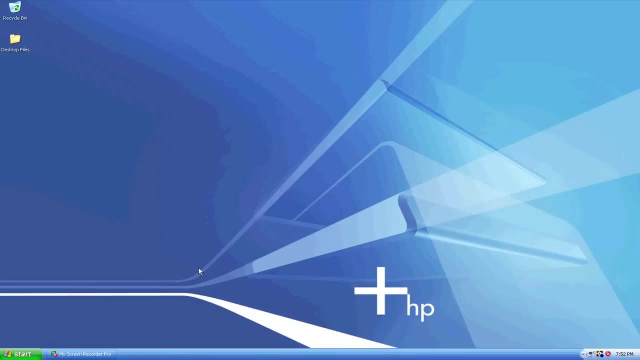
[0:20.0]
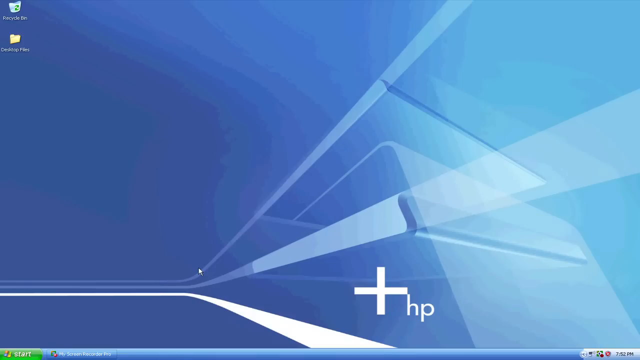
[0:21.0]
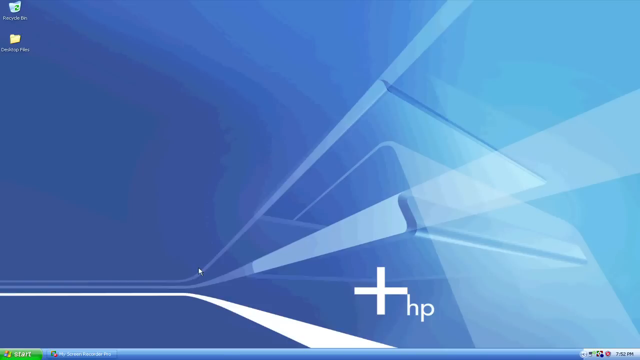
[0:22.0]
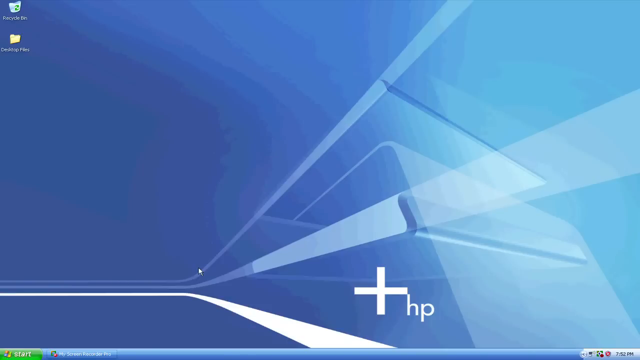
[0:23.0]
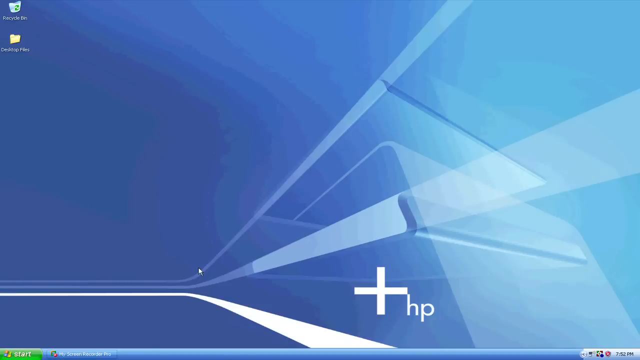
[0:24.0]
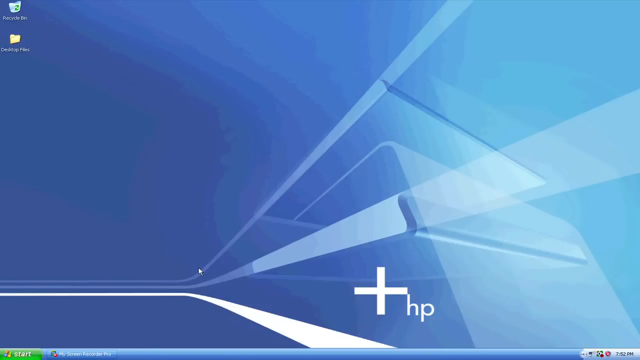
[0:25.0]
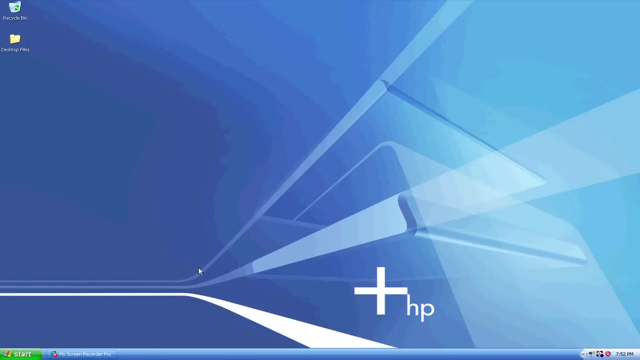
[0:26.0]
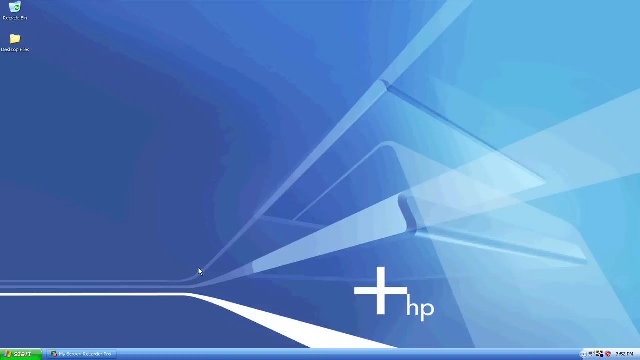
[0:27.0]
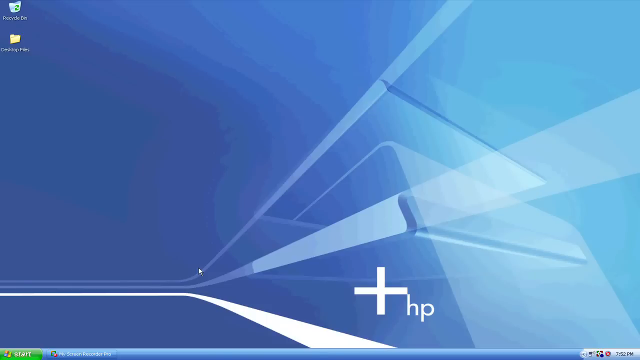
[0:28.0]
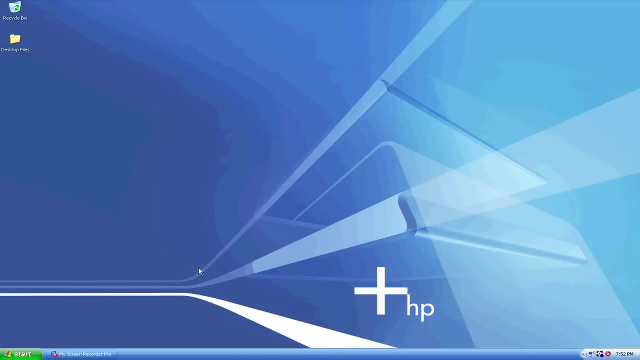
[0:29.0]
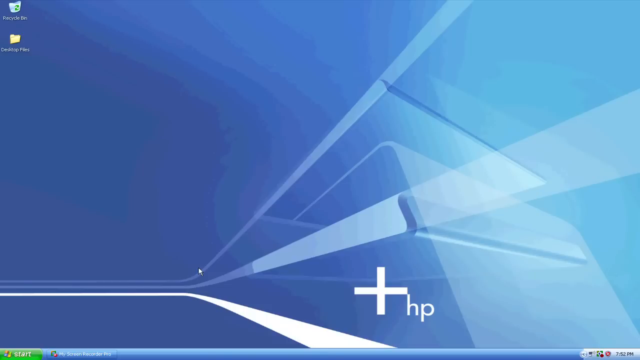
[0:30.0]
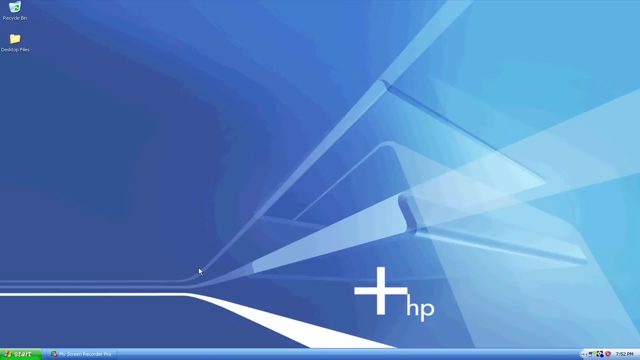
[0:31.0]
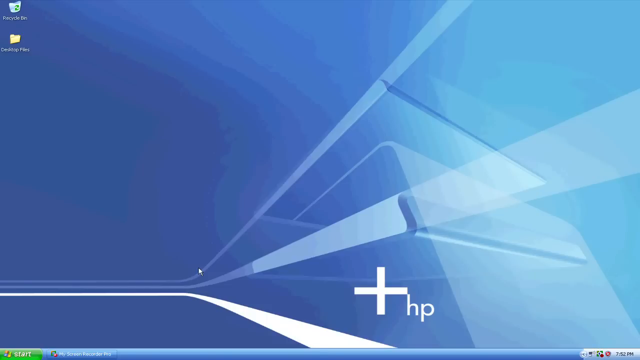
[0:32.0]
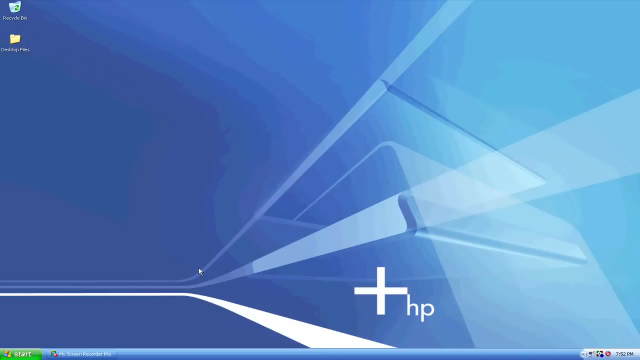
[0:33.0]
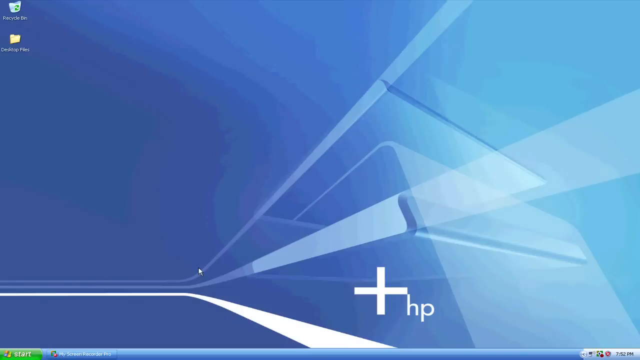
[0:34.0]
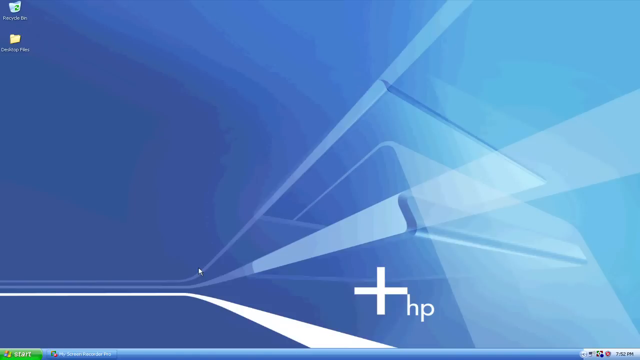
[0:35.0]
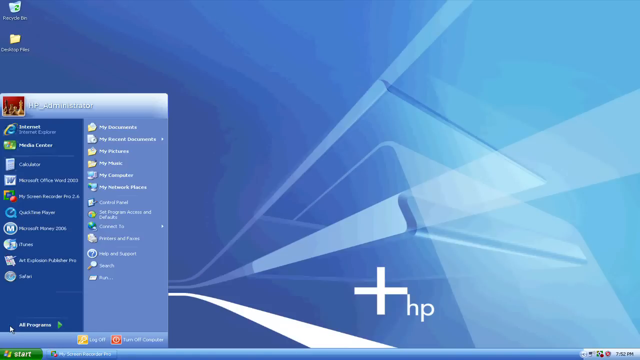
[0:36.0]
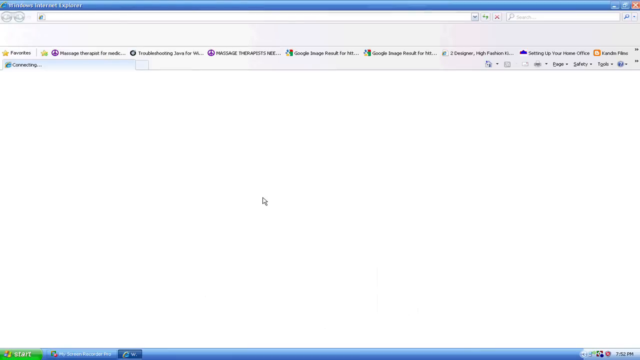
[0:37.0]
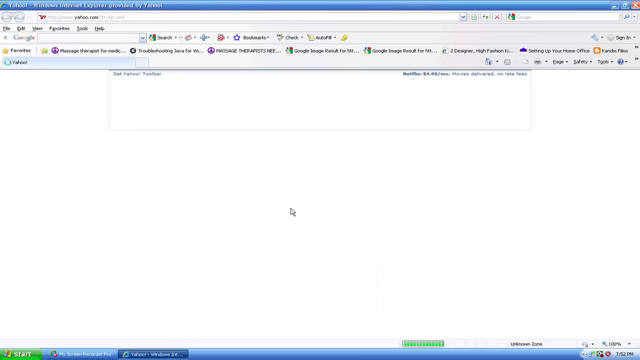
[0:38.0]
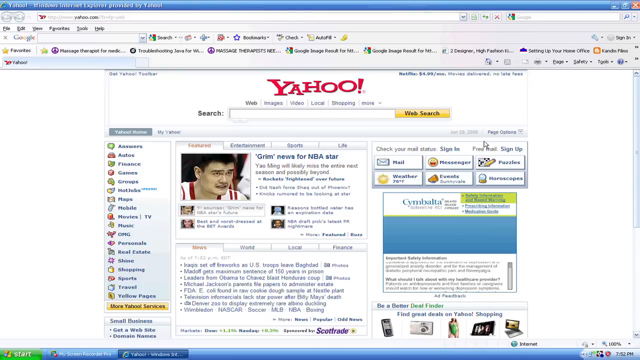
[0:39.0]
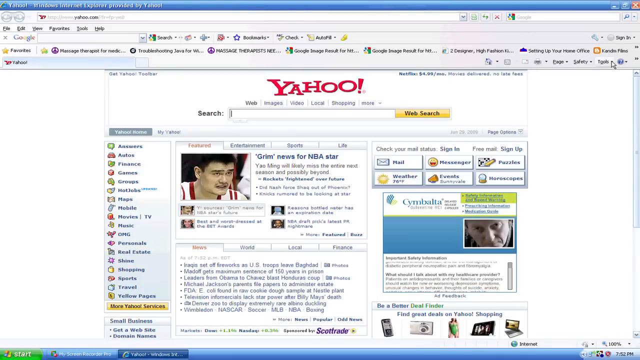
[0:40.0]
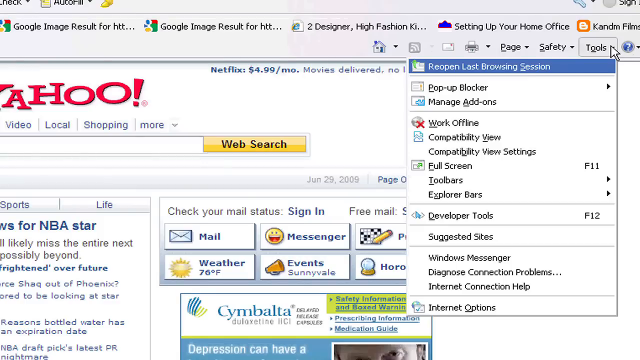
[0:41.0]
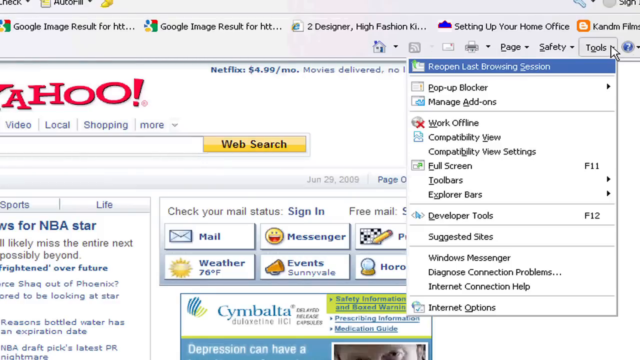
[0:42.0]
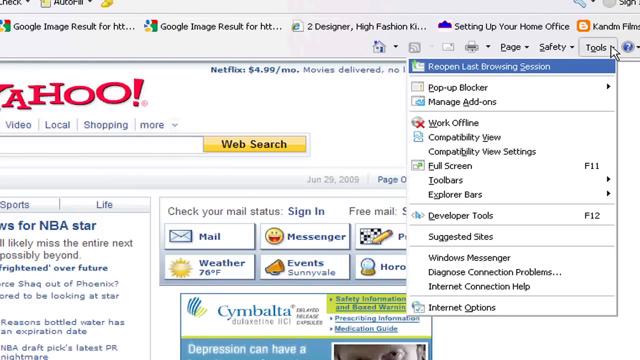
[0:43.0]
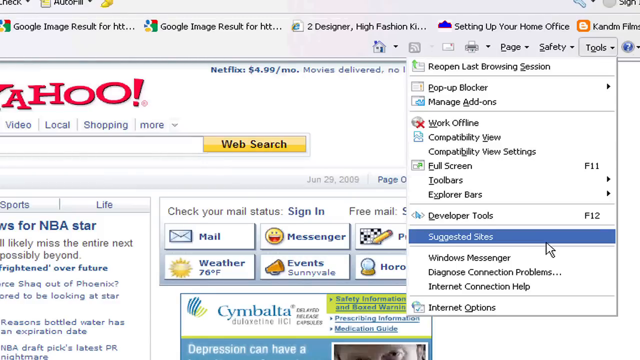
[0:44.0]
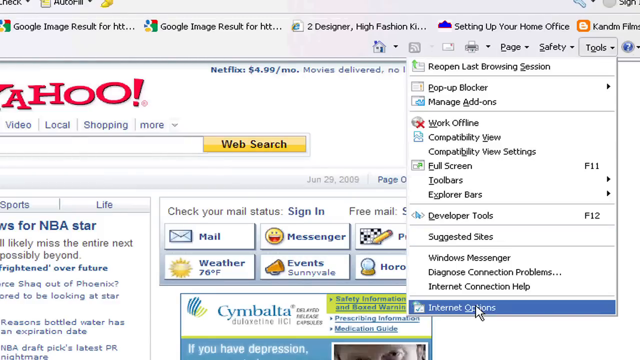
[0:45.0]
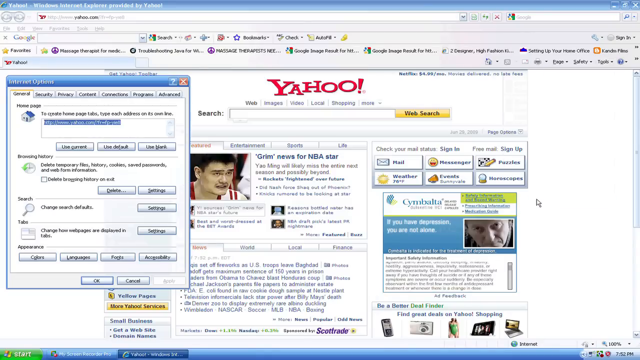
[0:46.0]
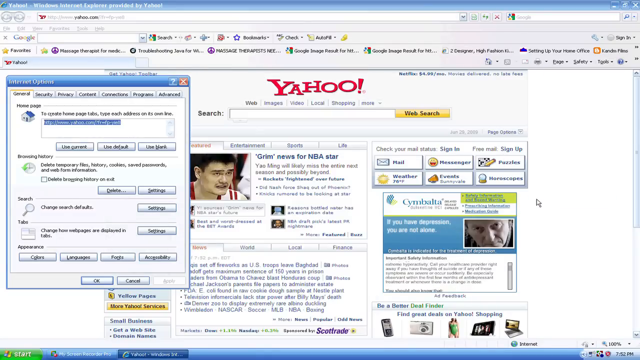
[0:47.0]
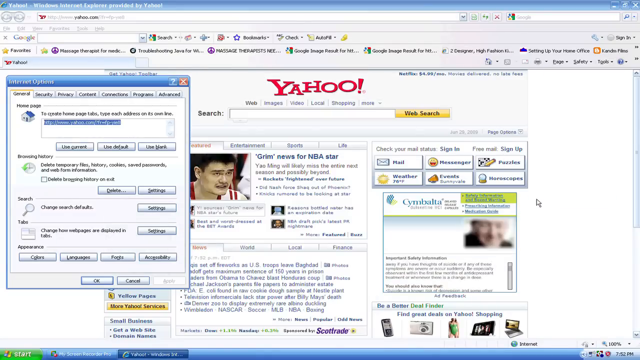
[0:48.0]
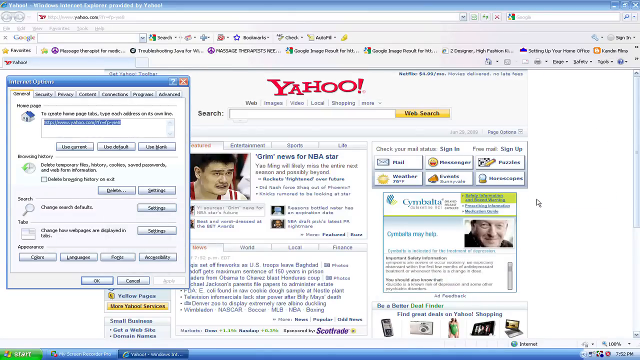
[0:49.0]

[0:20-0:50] The screen shows a desktop with a blue wallpaper bearing a plus sign and the letters HP. In the top left of the screen is a recycle bin icon, with a yellow folder below it. The person selects the Windows button in the bottom left of the screen, and a menu pops up showing "HP administrator"; below that it lists "Internet Explorer, Media, Word, Microsoft Word, QuickTime Player, Microsoft, 2006, iTunes, Safari". The person opens Internet Explorer, whose opening page is the Yahoo search page with the headline "Grim news for NBA star Yao Ming will likely miss the entire next season and possibly beyond". Multiple other articles and various options appear below it, and above it is a search bar labeled "Web Search". On the right side, the person clicks on Tools, opens a drop-down menu, and selects Internet Options.